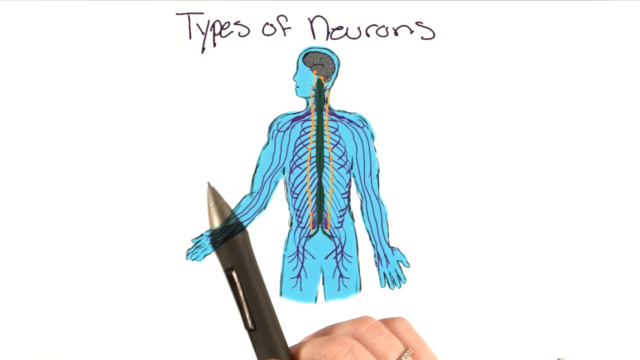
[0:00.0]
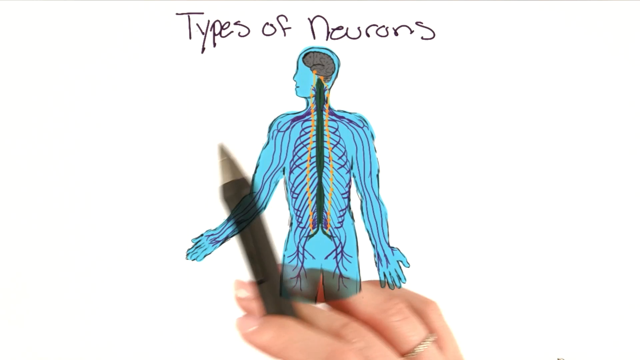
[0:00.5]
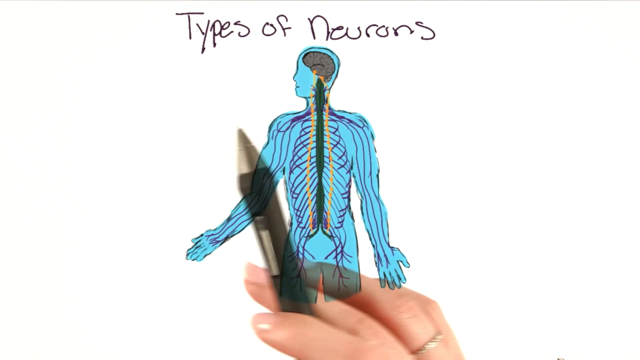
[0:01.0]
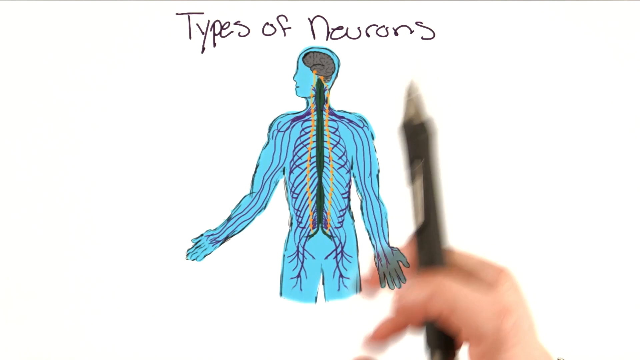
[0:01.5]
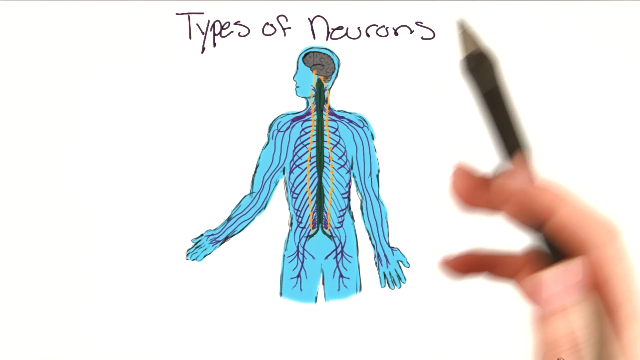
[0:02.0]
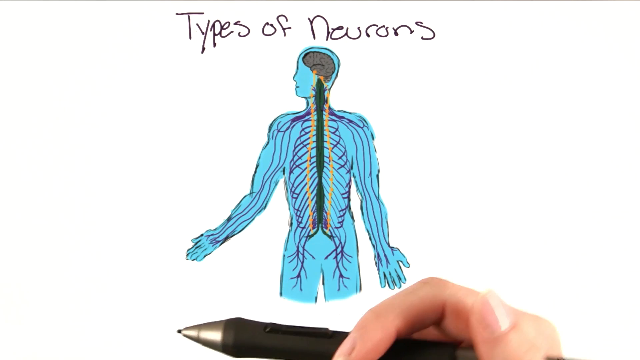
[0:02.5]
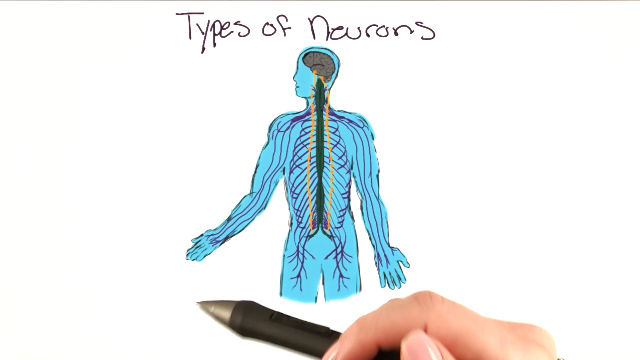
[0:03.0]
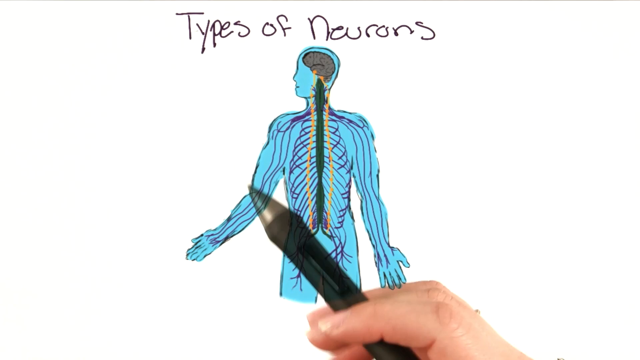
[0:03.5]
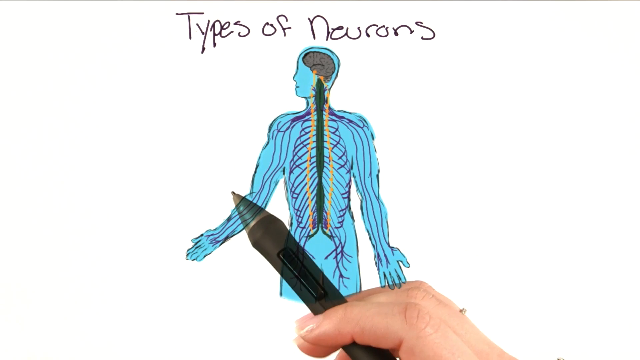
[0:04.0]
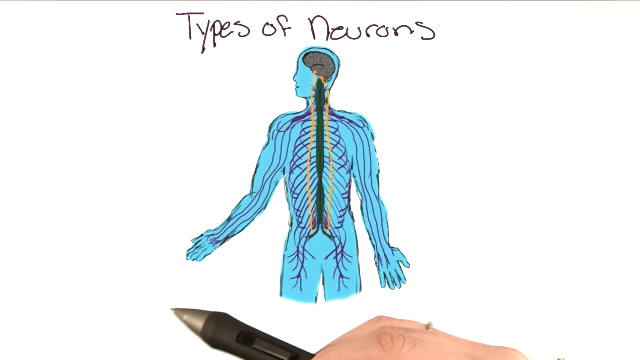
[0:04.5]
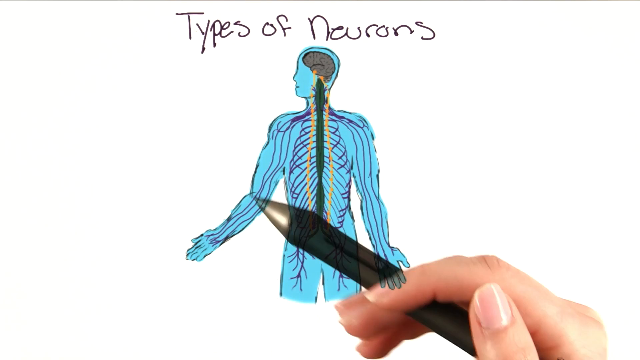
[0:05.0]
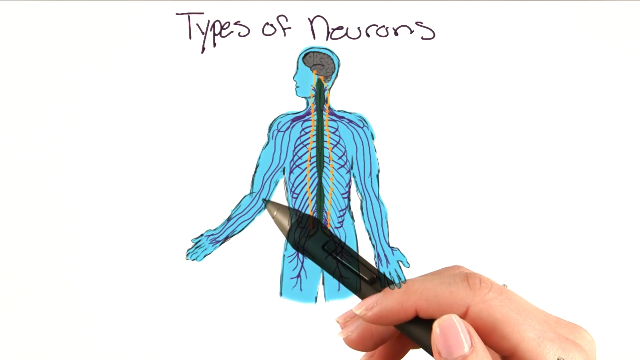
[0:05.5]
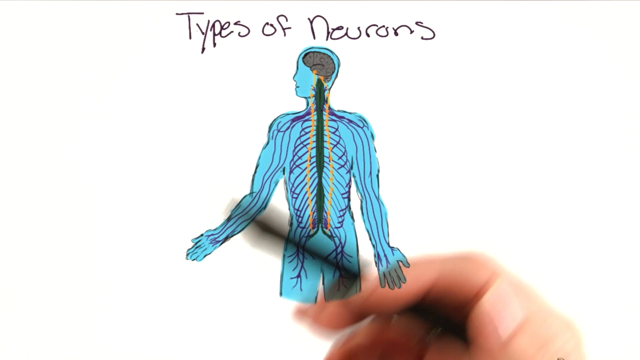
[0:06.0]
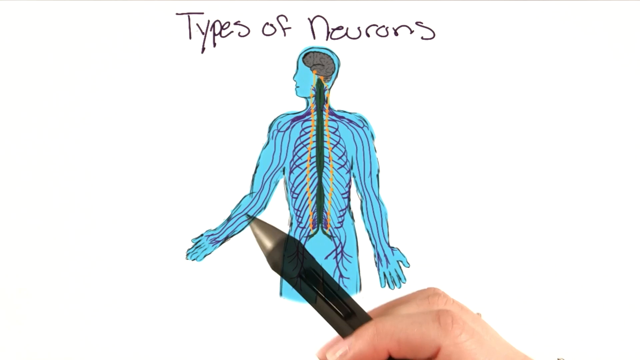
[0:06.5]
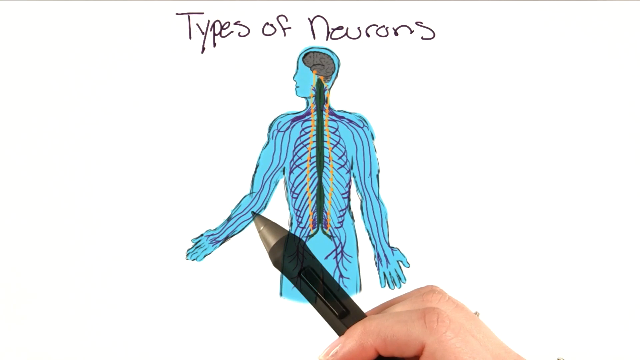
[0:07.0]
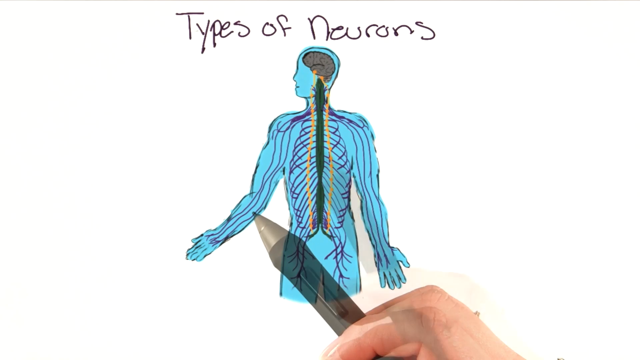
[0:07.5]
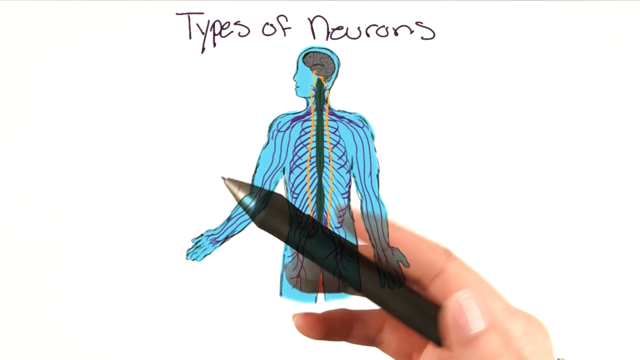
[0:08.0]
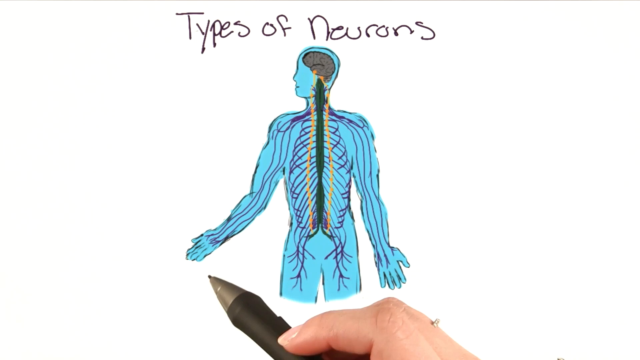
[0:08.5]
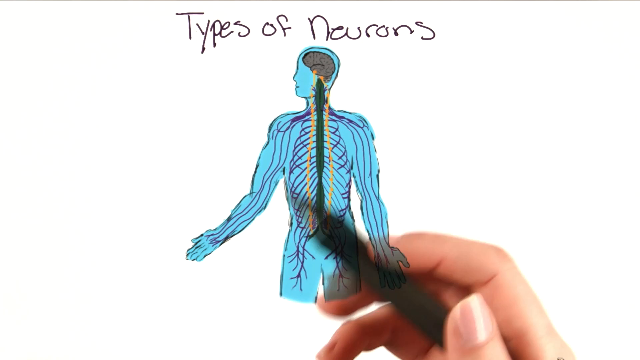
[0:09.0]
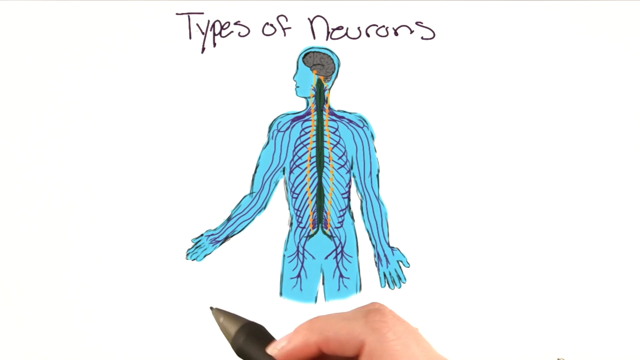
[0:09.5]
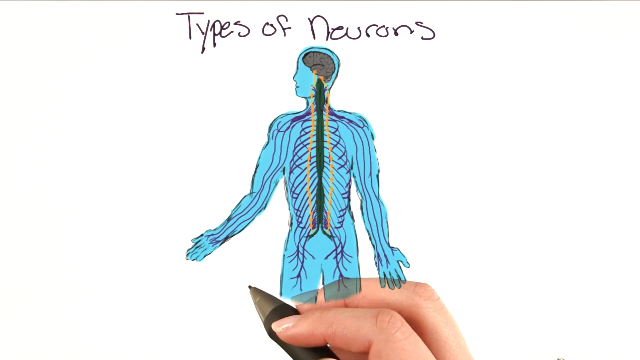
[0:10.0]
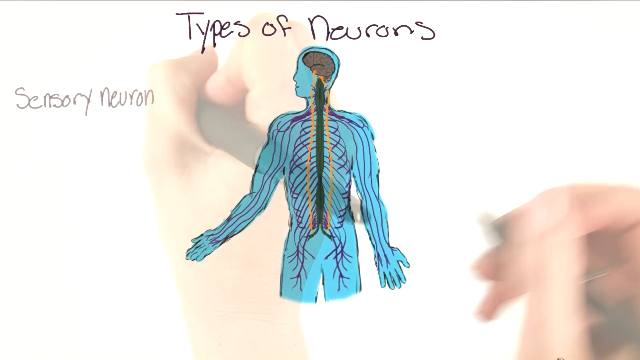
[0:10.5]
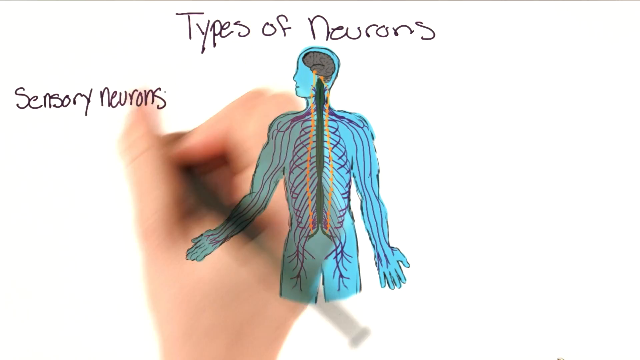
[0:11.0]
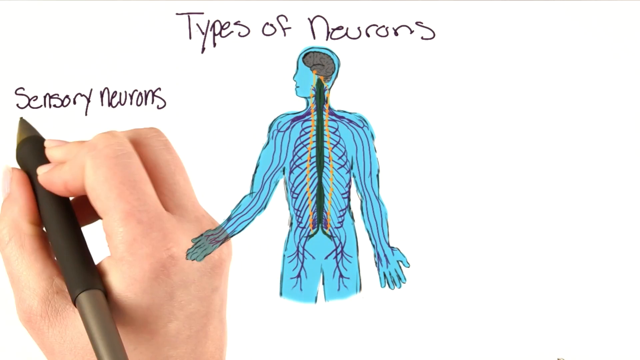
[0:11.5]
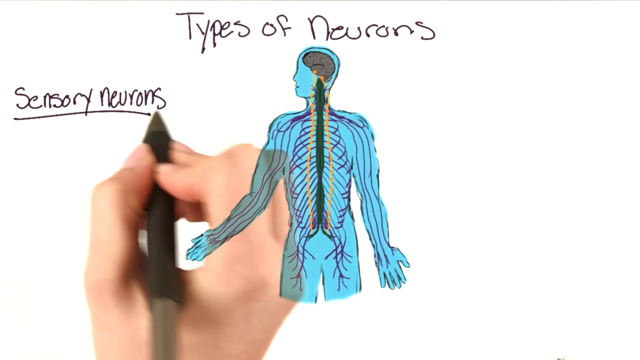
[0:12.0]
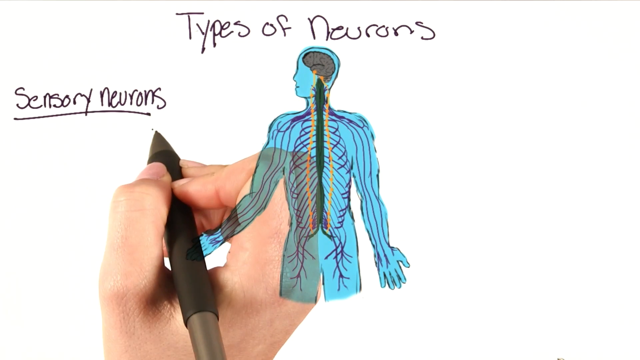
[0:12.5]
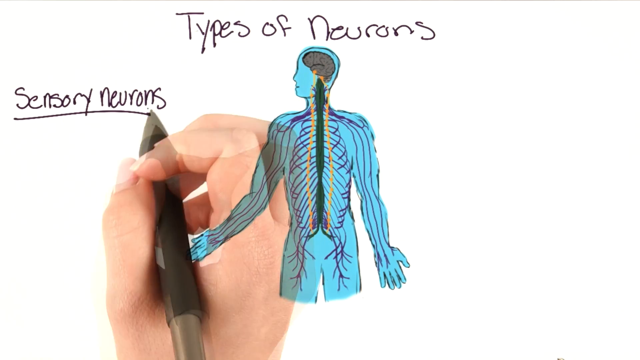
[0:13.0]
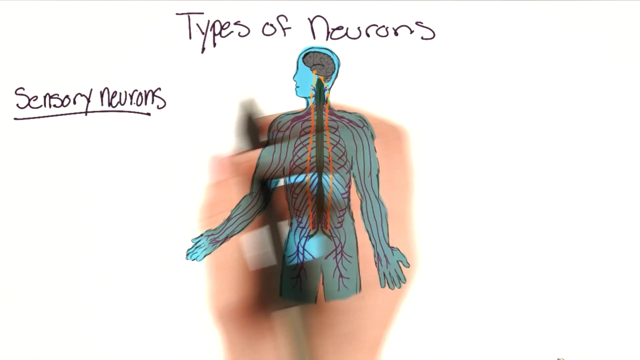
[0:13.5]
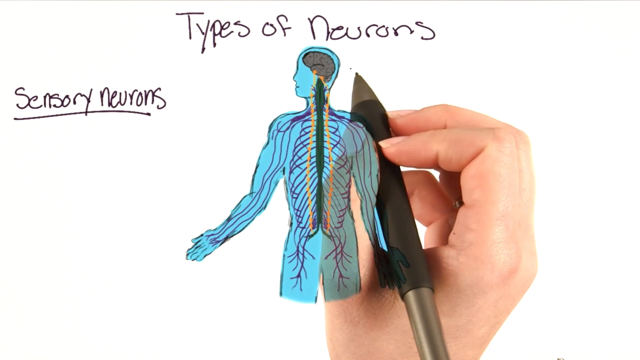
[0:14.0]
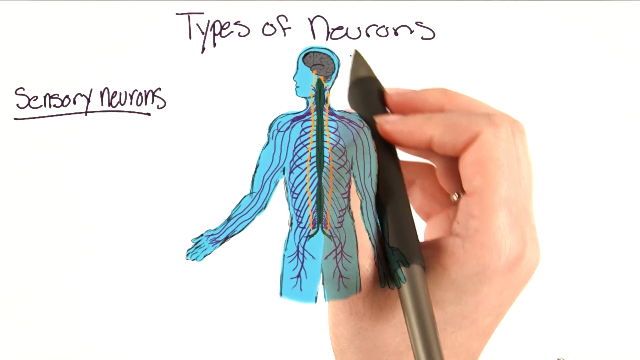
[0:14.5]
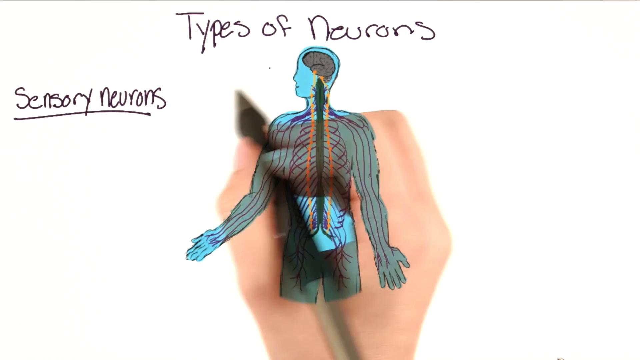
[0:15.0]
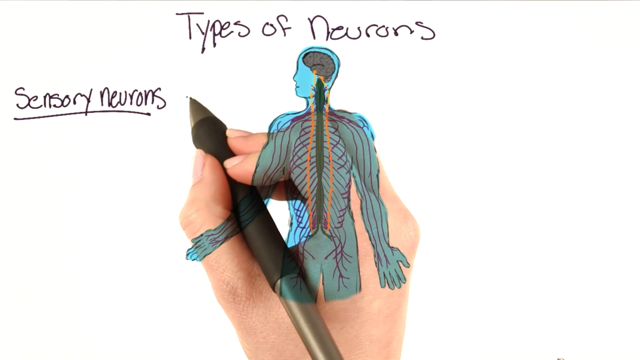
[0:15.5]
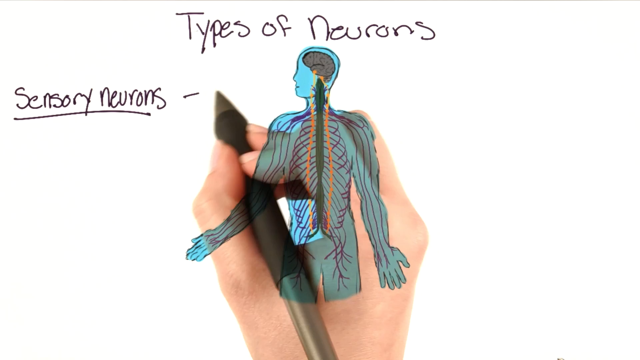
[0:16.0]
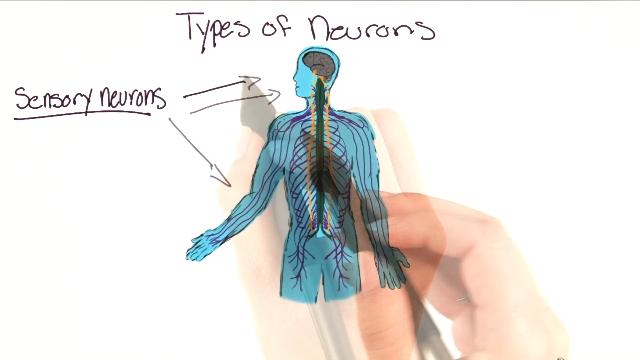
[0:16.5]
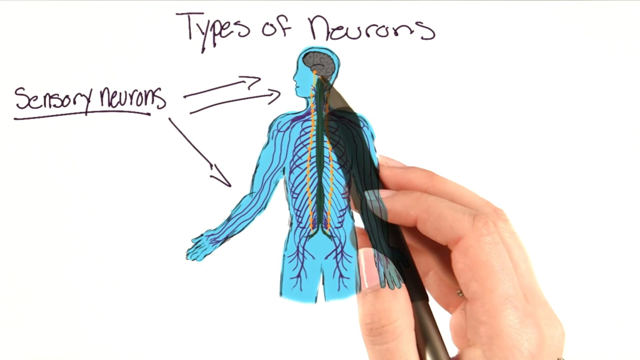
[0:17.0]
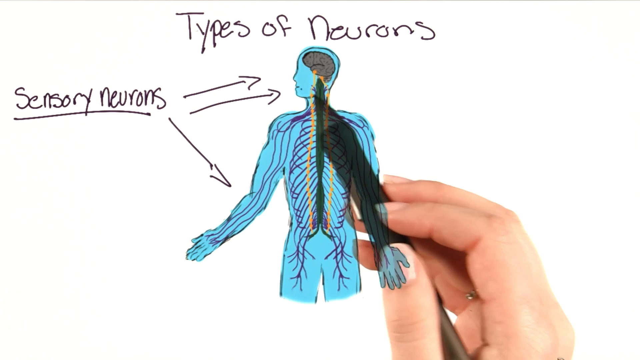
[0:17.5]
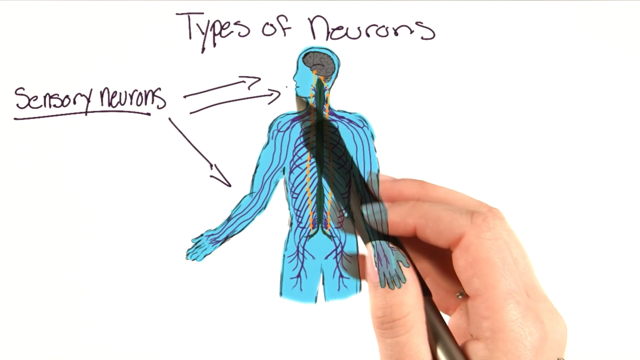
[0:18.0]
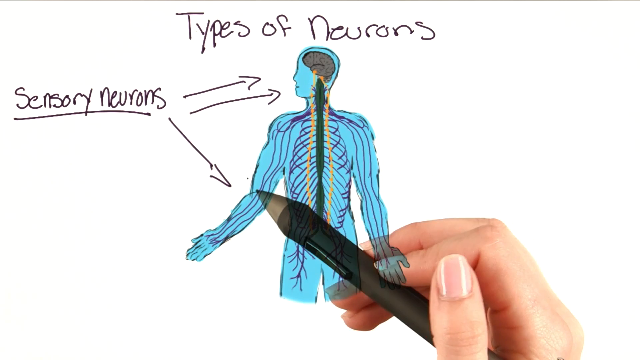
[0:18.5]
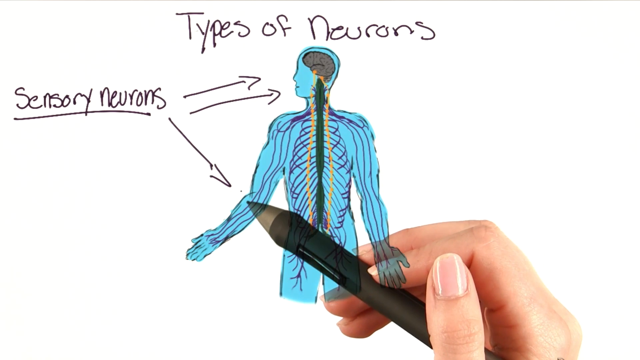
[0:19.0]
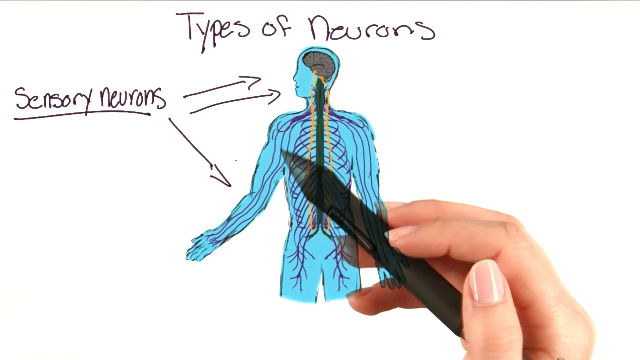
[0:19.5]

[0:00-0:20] A hand holding a pen goes over a diagram of a human body figure. The figure is just an outline of a body with a blue inside, with no eyes or other features; only the brain and the spine going down the body are visible, along with a purple color representing the nerves and neurons running throughout the body. Above the figure, written in black pen, are the words "types of neurons." There are three arrows: two point at the head, which faces left, and one points to the arm, which is slightly bent up, next to the words "sensory neurons." The hand holding the pen underlines "sensory neurons."